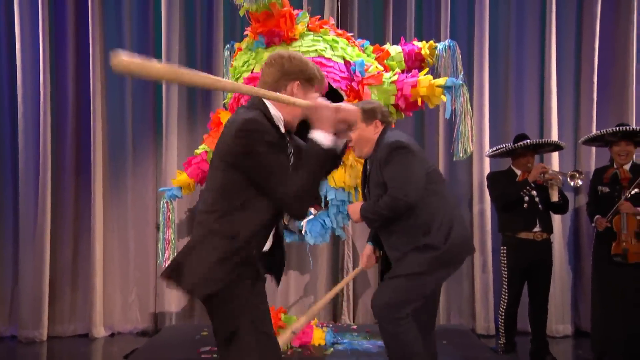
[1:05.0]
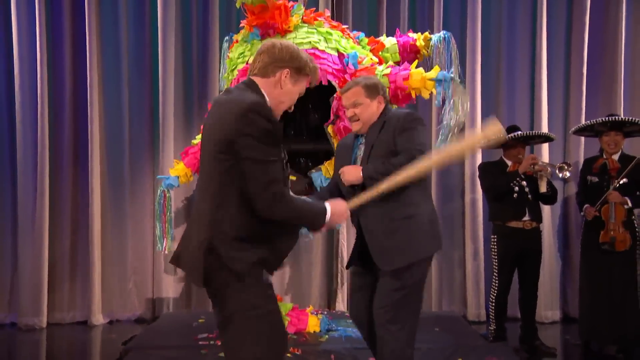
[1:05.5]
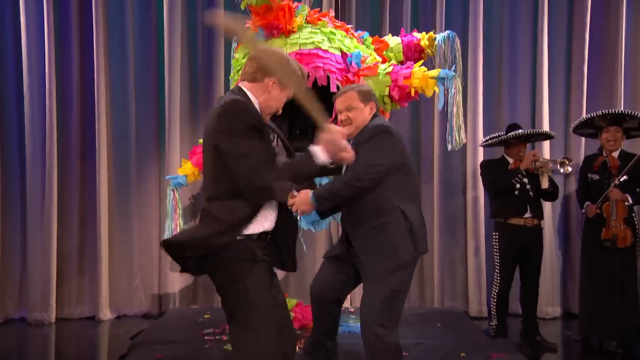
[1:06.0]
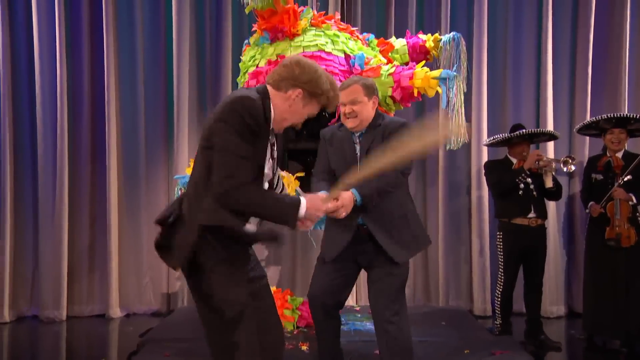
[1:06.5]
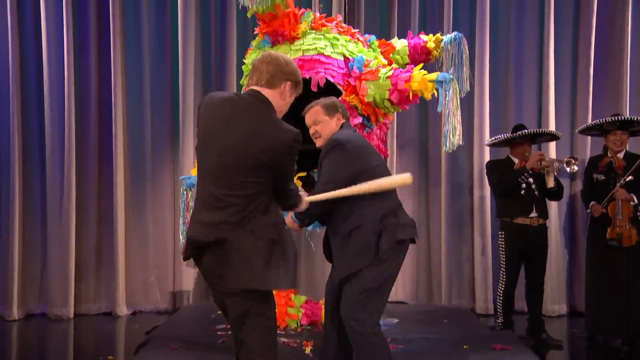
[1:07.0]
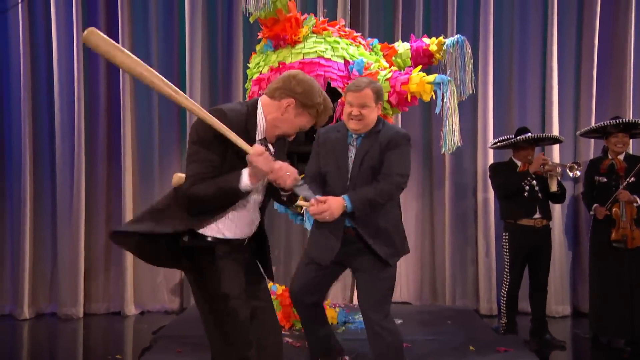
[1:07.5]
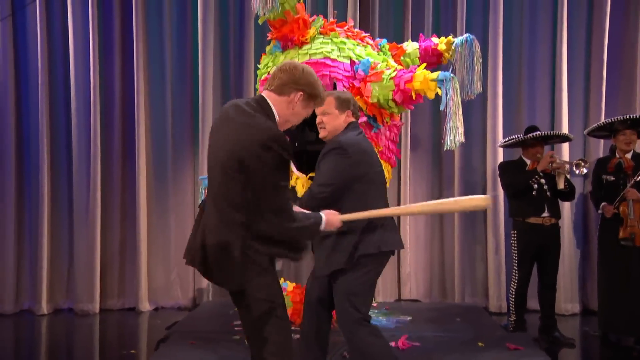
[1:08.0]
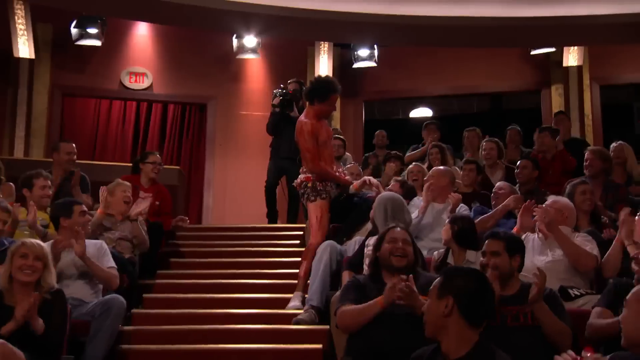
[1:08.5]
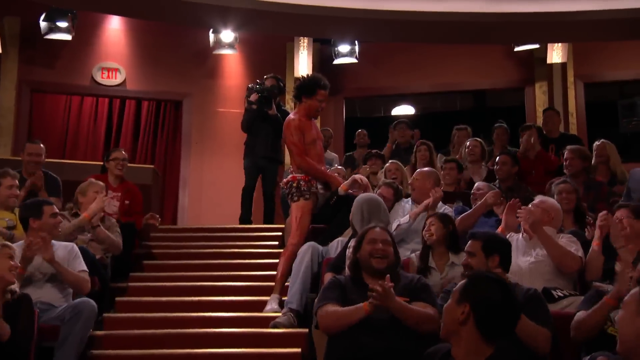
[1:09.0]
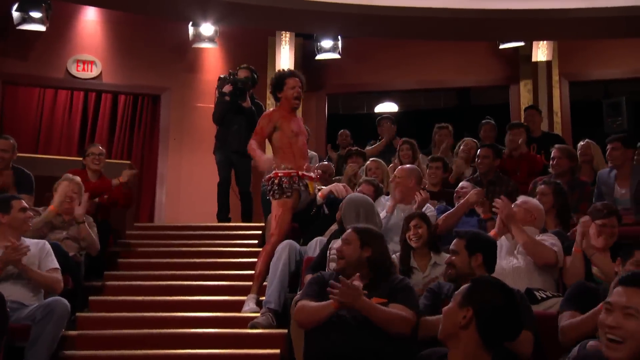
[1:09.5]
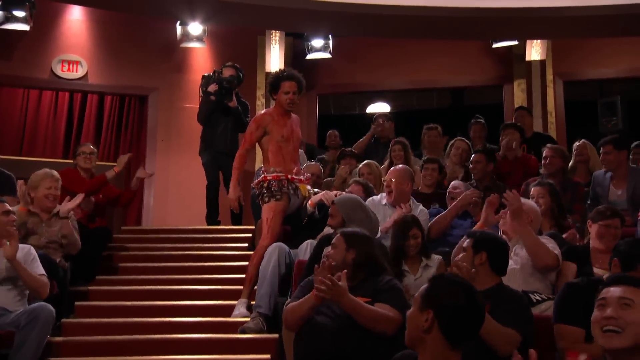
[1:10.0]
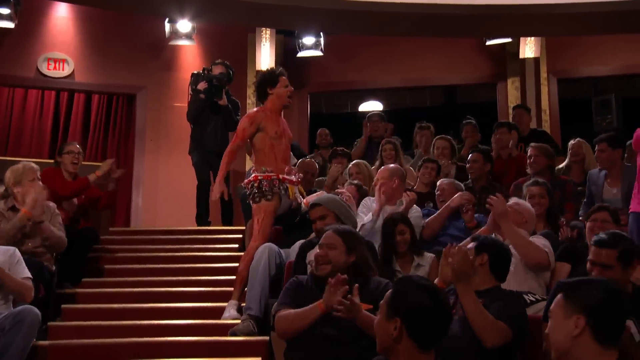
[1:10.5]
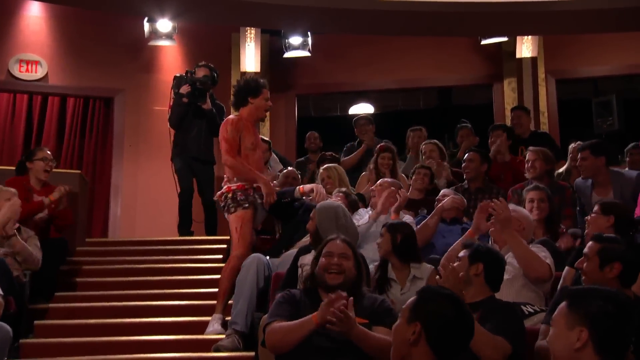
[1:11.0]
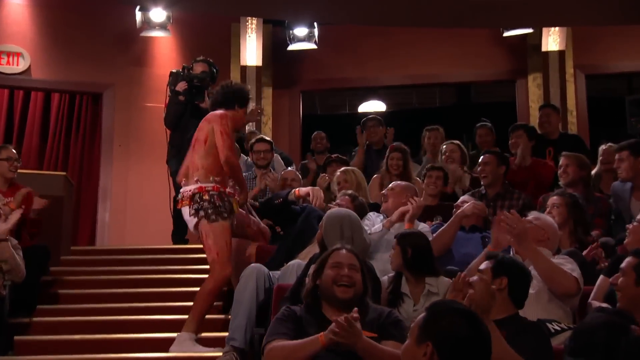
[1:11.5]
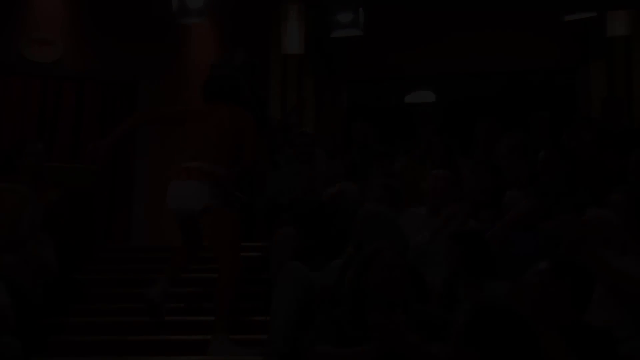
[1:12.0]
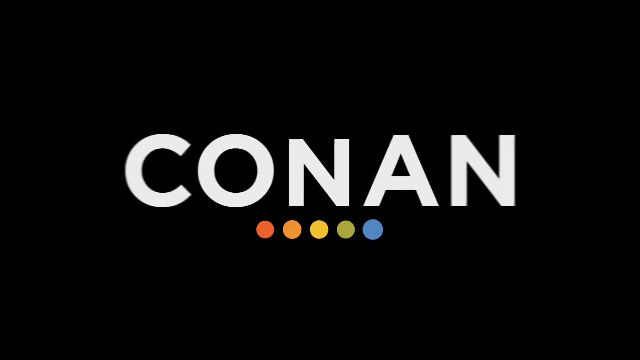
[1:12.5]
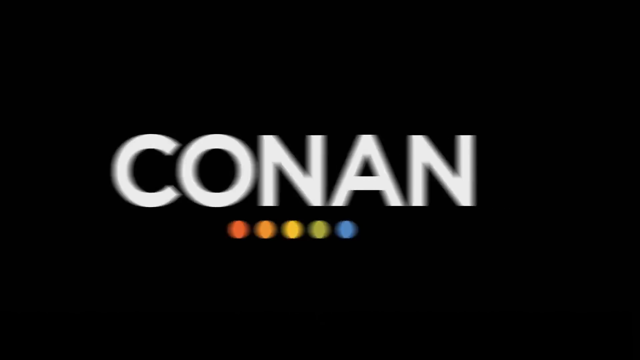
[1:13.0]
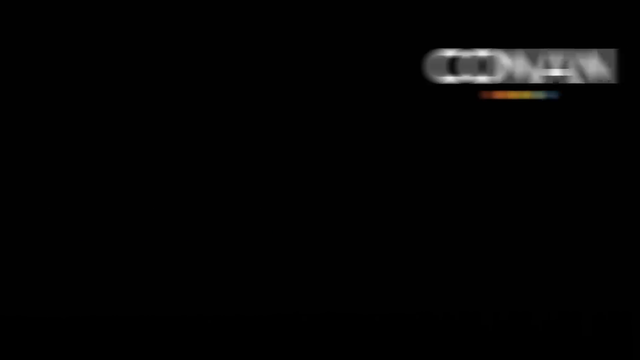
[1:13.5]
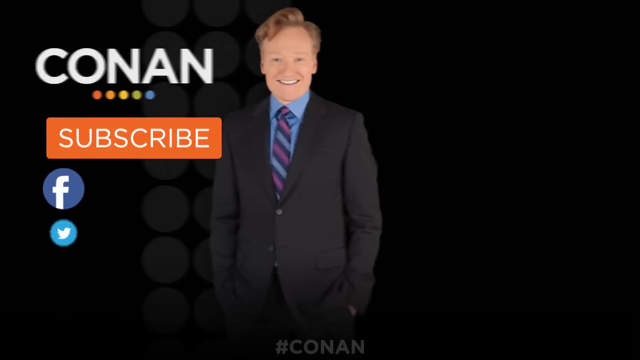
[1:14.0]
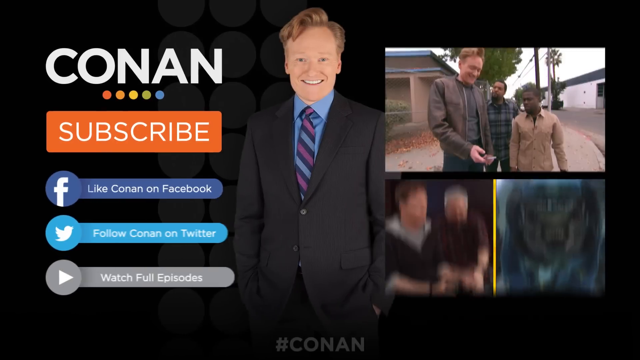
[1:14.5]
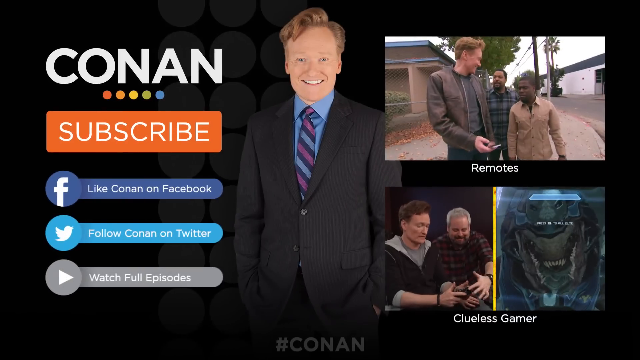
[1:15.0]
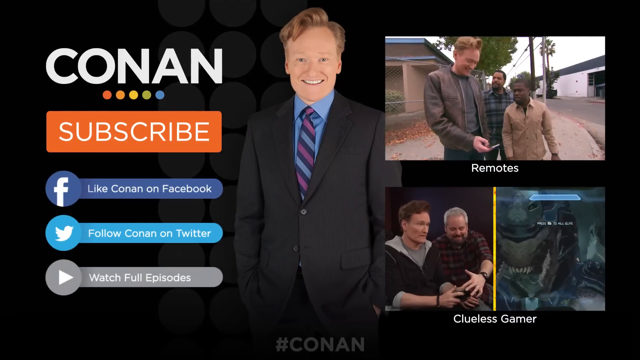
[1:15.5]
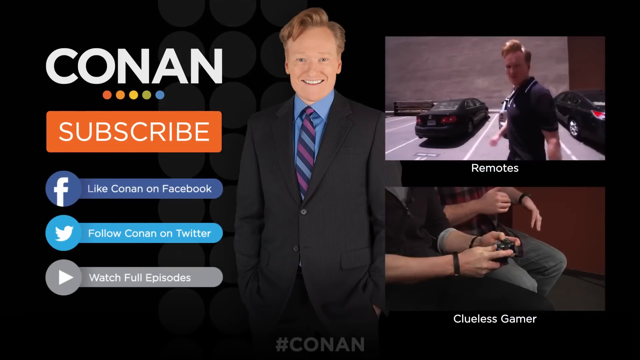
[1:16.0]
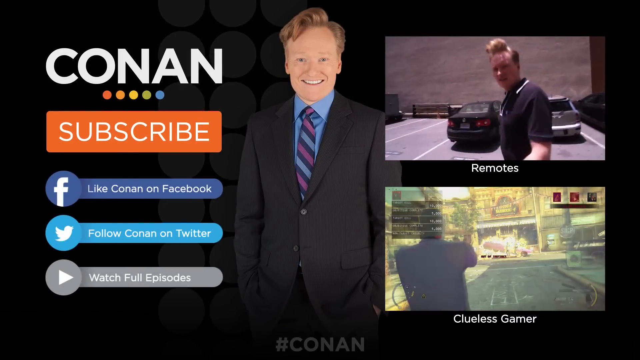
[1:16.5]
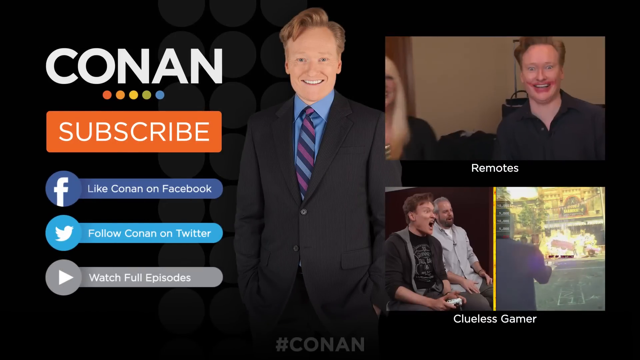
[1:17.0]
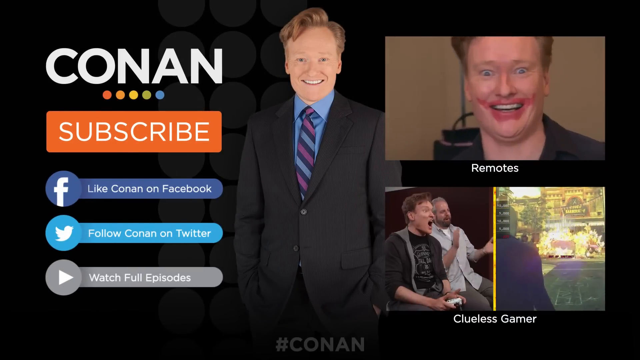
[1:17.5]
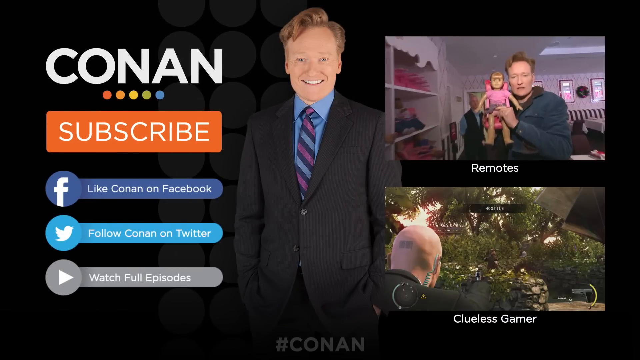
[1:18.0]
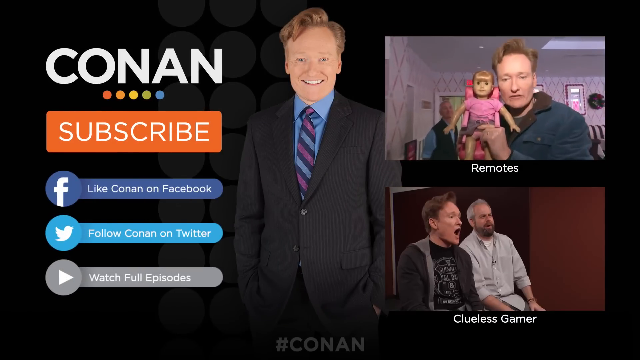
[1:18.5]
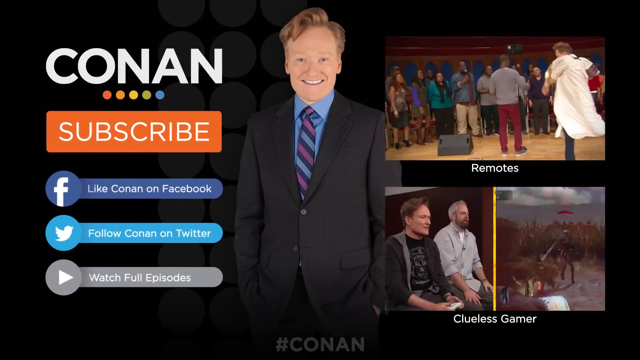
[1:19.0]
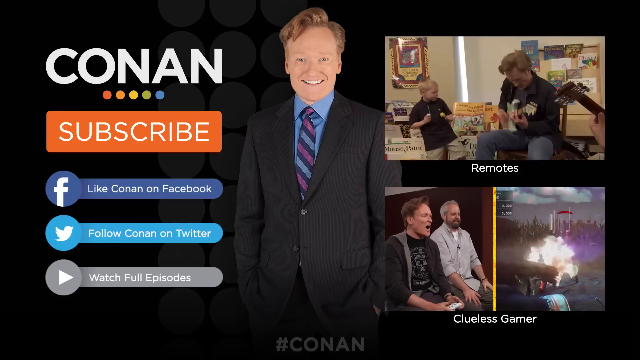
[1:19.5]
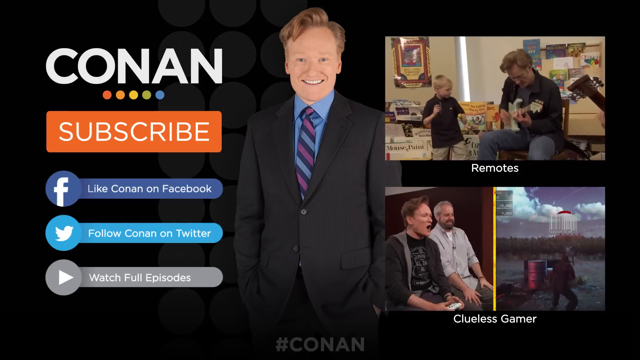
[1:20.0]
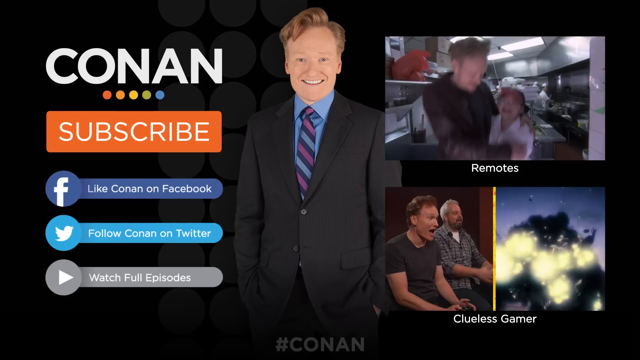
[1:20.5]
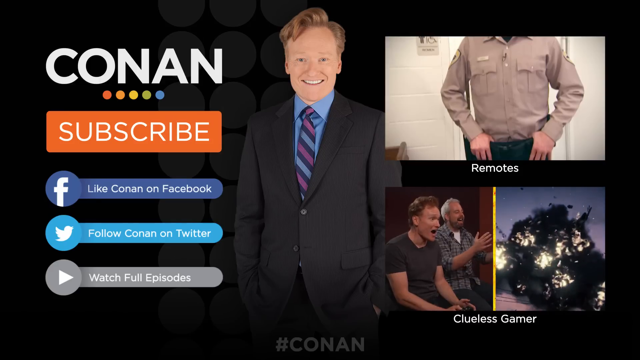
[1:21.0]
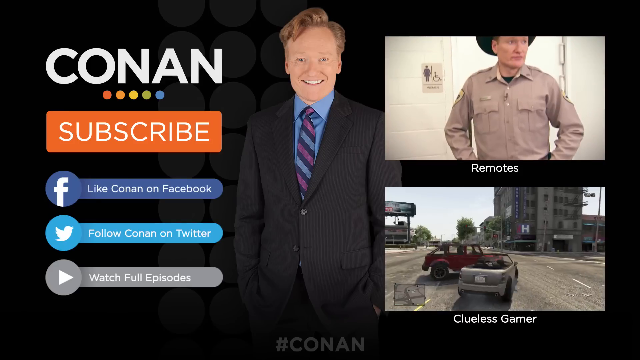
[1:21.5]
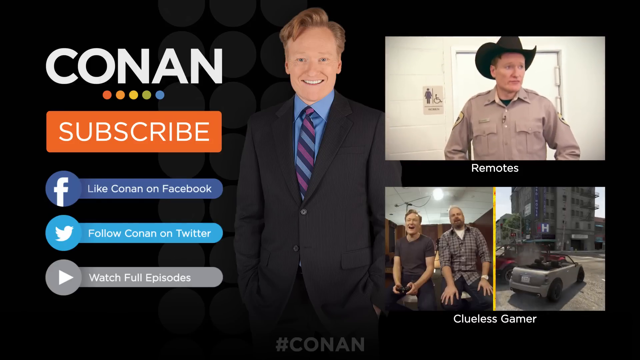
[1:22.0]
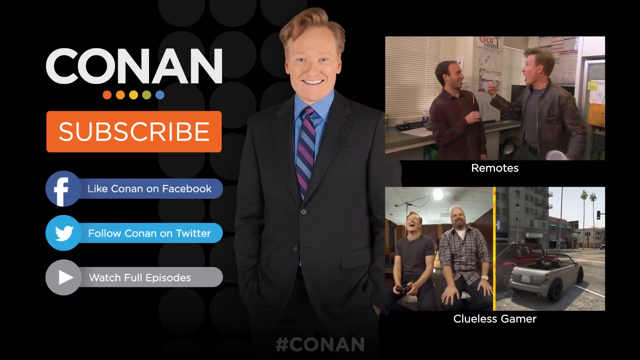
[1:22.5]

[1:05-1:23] Conan keeps swinging his baseball bat to hit the second man in the dark suit and blue shirt. They are standing on stage in front of a broken-open piñata, with a mariachi band to their right whose players are dressed in black outfits with large Mexican hats. Conan and the man continue taking turns swinging their bats at each other. Next, the partially naked man, wearing a loincloth or shorts covered with many M&M packets, is busy giving M&M's to audience members on the right side of the aisle. All the audience members are applauding. In the background, a cameraman dressed in black films the entire thing, and at the back there is an exit with an exit sign on the left above the doorway. The man in the M&M loincloth keeps giving M&M's to the audience until the video ends with a black screen and a brief flash of the name "Conan" in large white capital letters. Next, an image of Conan smiling in a blue shirt appears.